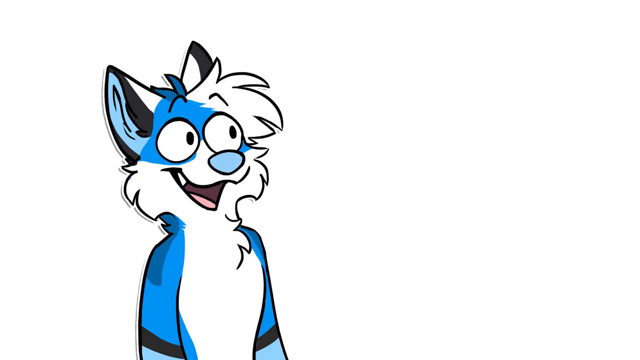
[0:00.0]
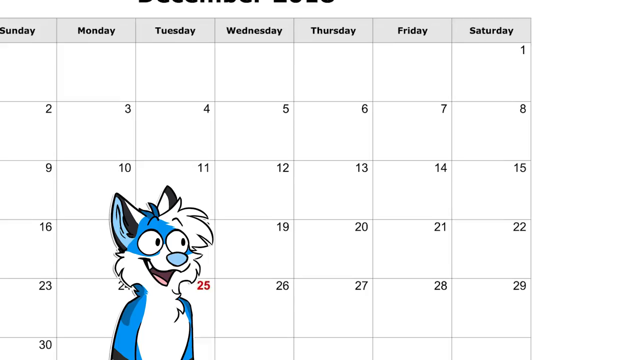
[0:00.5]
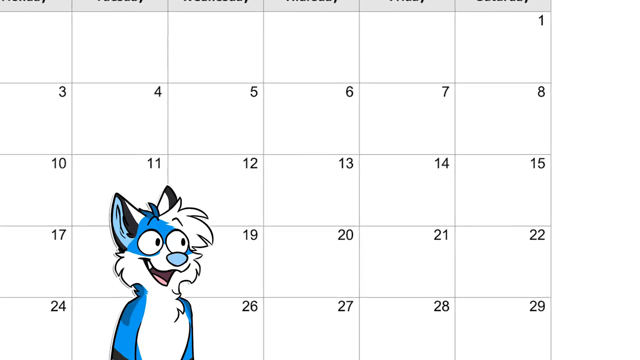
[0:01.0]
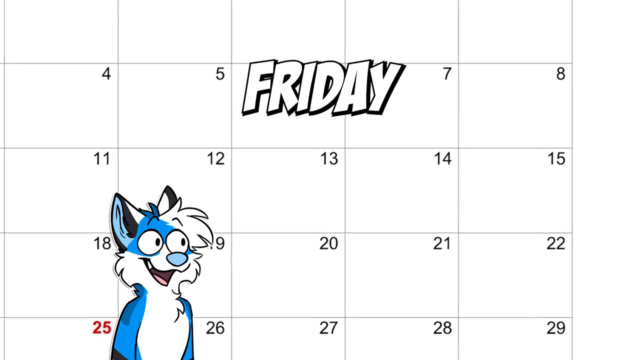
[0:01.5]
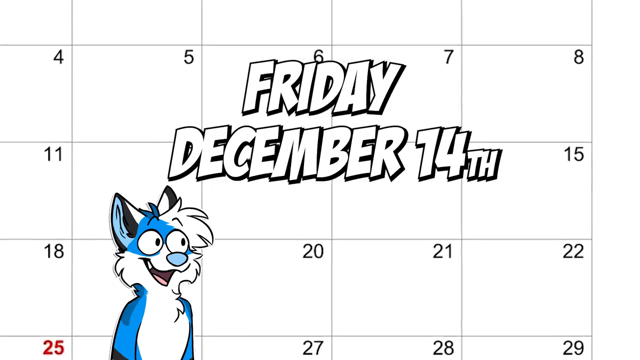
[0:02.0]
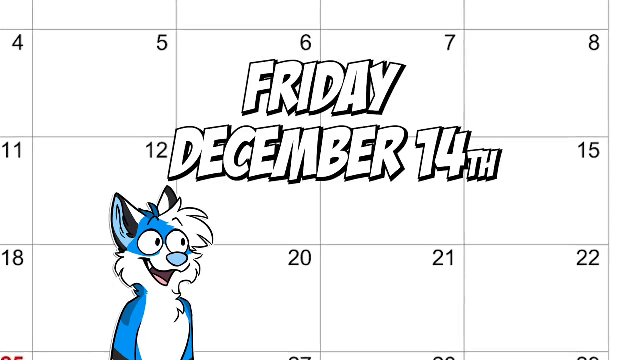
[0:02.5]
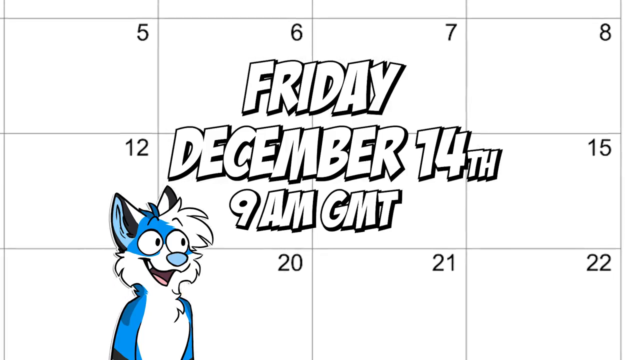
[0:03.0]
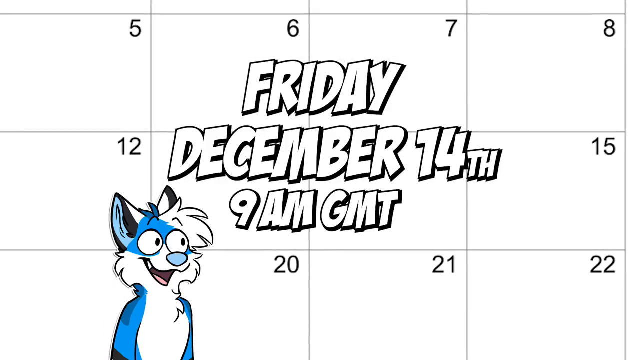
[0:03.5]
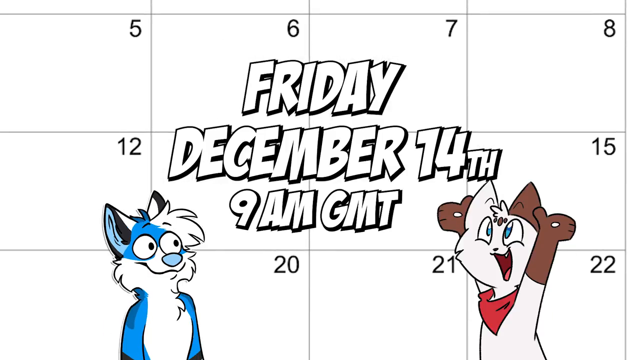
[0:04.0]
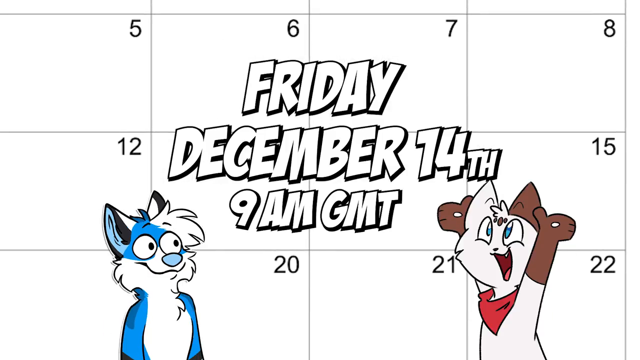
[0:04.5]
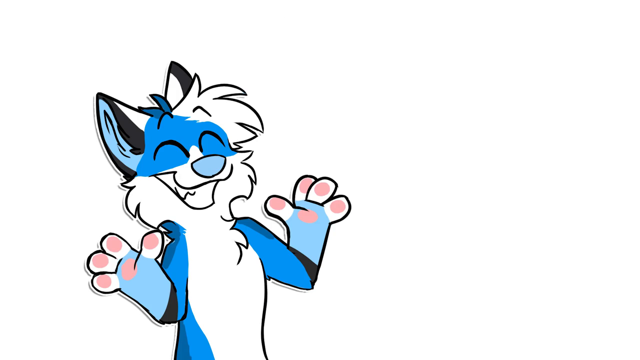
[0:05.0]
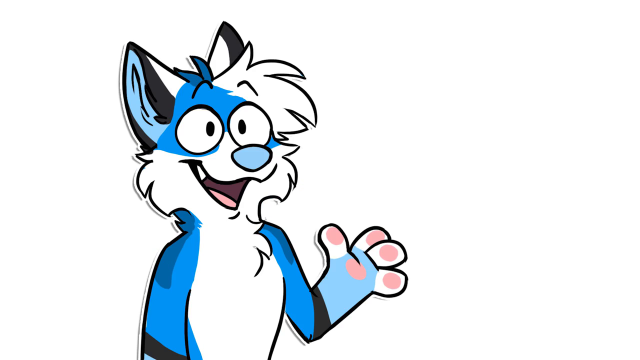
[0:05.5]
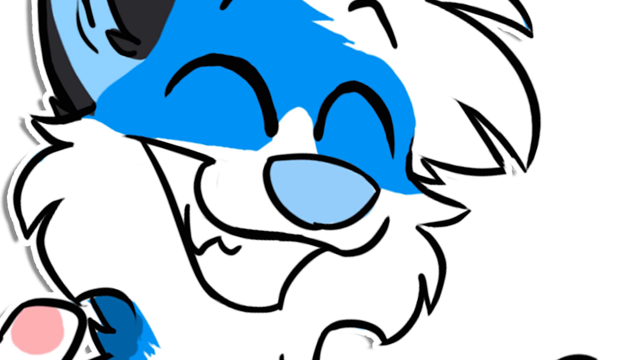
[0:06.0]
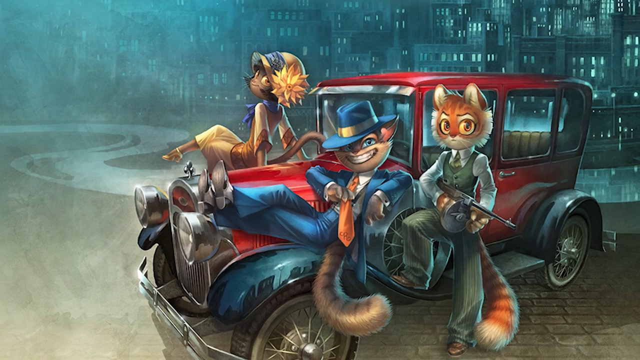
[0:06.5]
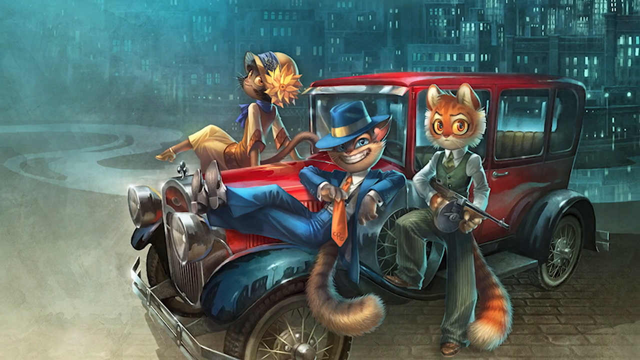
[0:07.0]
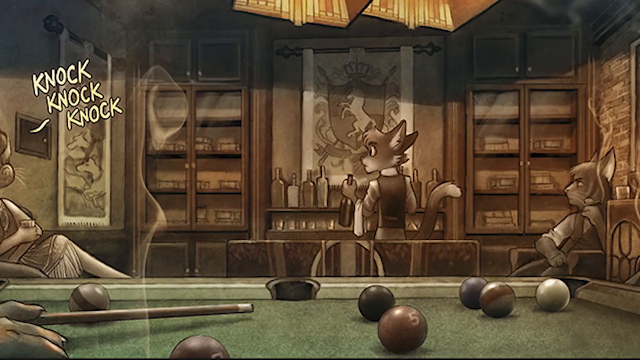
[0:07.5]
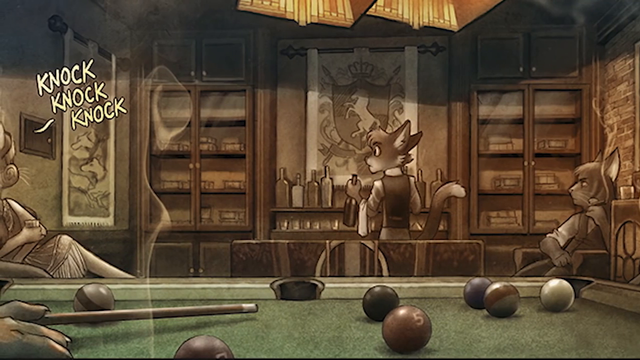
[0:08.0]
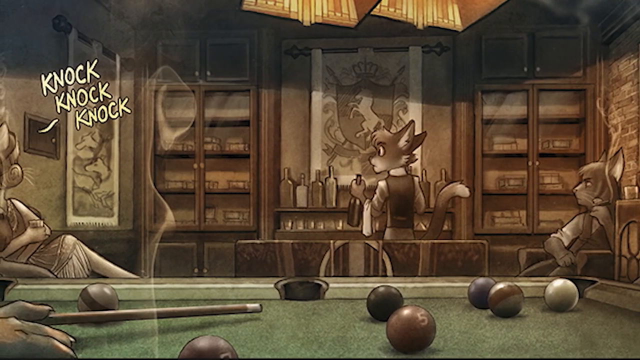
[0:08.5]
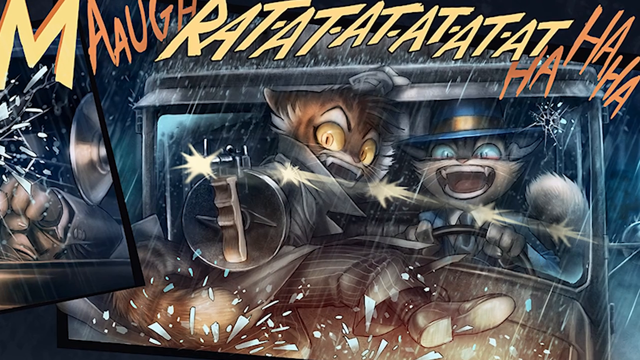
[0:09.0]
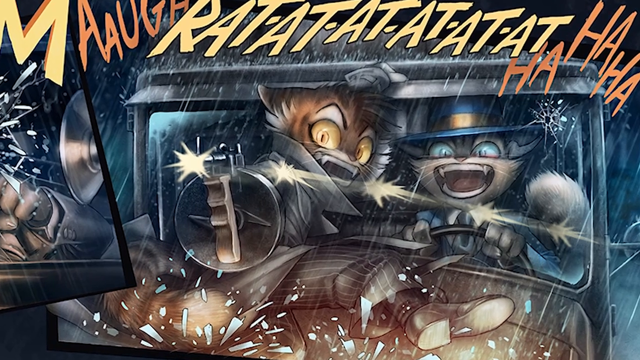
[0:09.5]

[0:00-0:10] A blue and white cartoon cat appears against an all-white backdrop, which then turns into a calendar. The cat stays stationary on the left-hand side, just looking, as the calendar zooms in; in the middle of the screen it reads "Friday, December 14th, 9 a.m. GMT." Another character, which looks like a cat as well, appears on the right-hand side, and the two quickly throw up their hands to celebrate together. The blue cat is then shown by itself with its hands up, followed by various pictures of art showing cats in different scenarios.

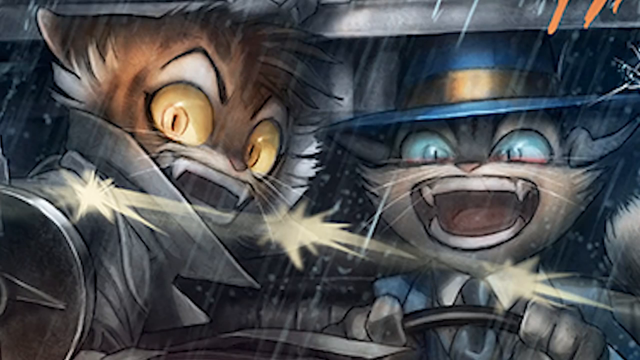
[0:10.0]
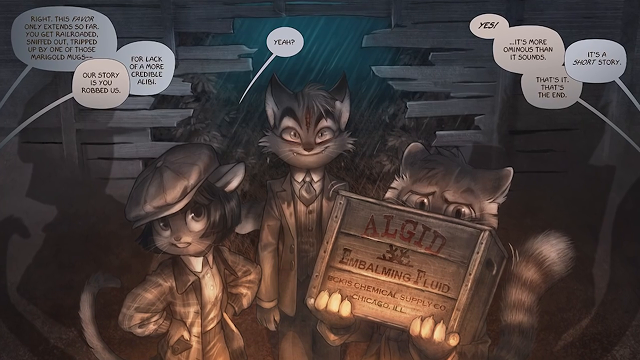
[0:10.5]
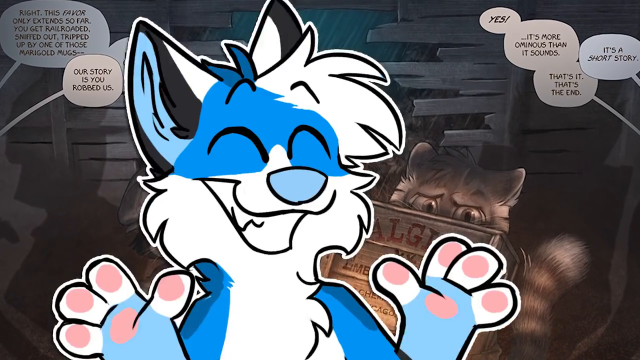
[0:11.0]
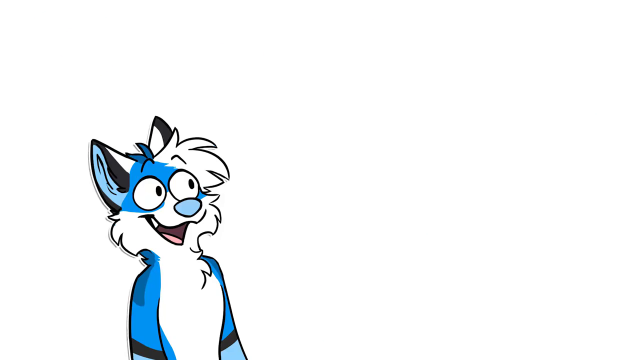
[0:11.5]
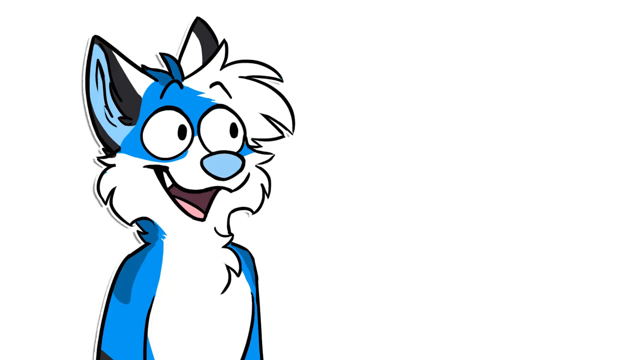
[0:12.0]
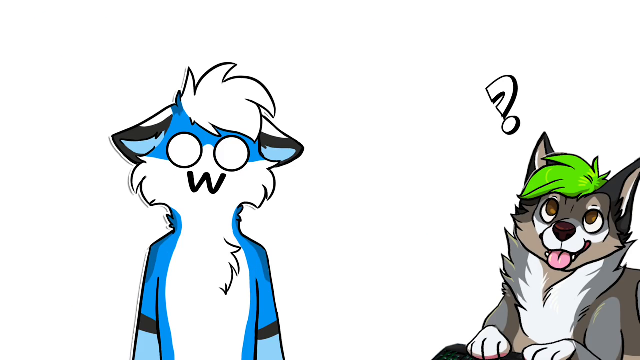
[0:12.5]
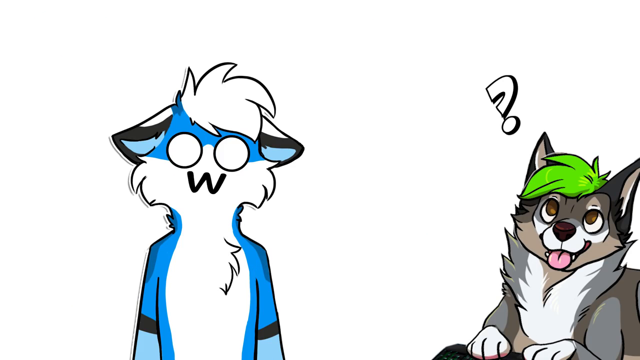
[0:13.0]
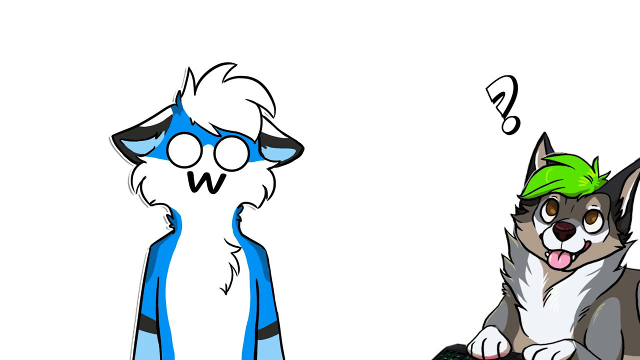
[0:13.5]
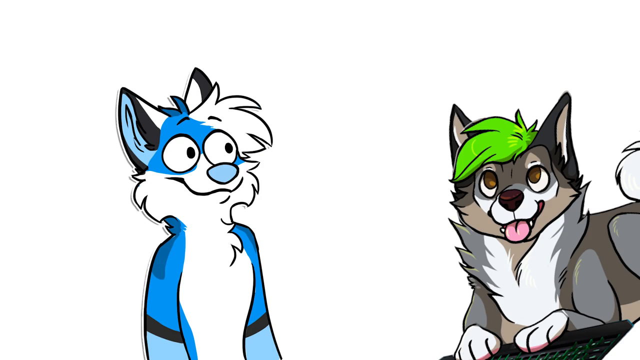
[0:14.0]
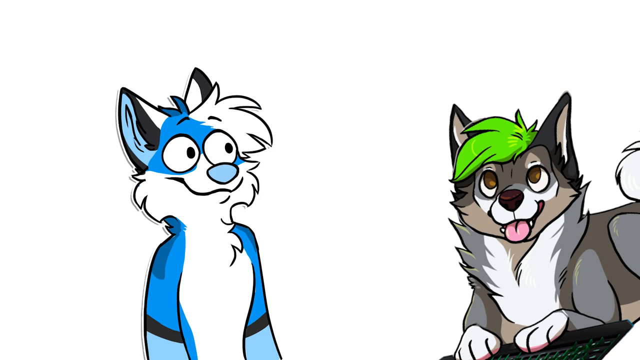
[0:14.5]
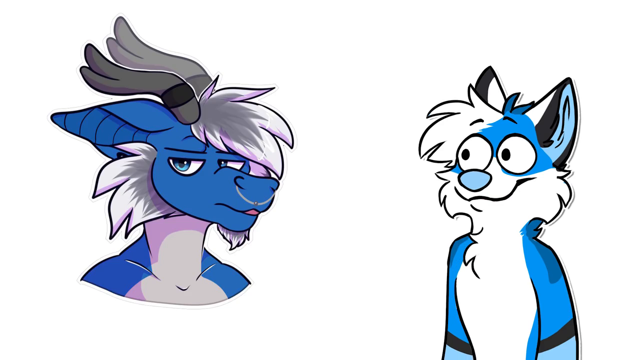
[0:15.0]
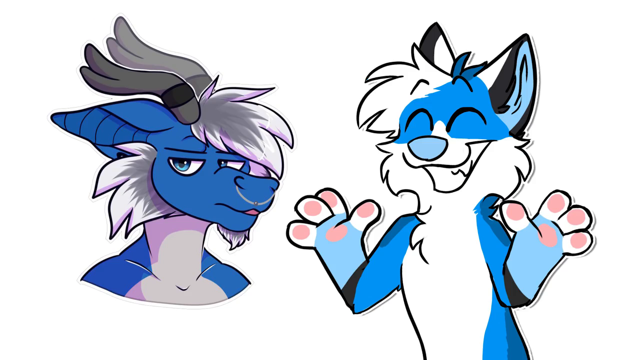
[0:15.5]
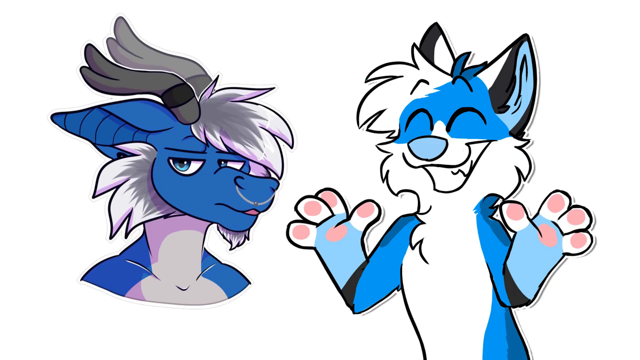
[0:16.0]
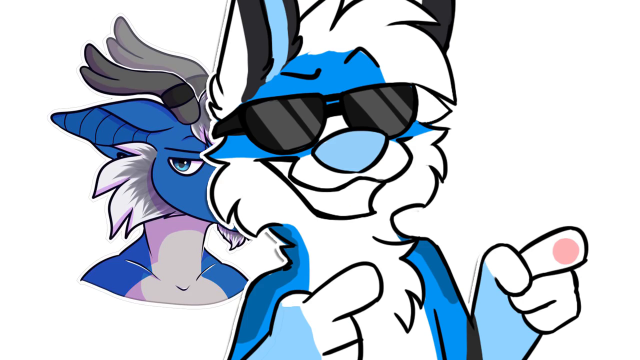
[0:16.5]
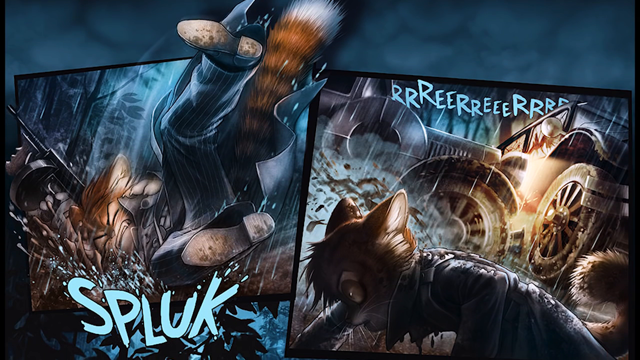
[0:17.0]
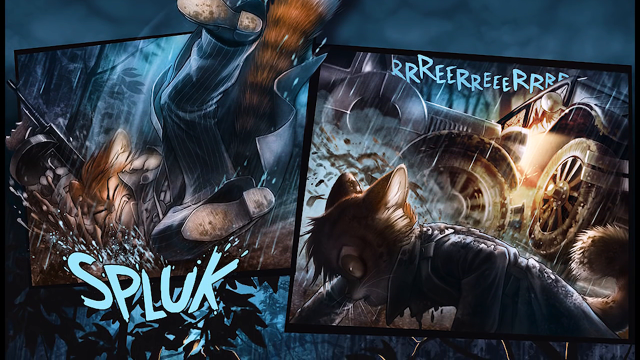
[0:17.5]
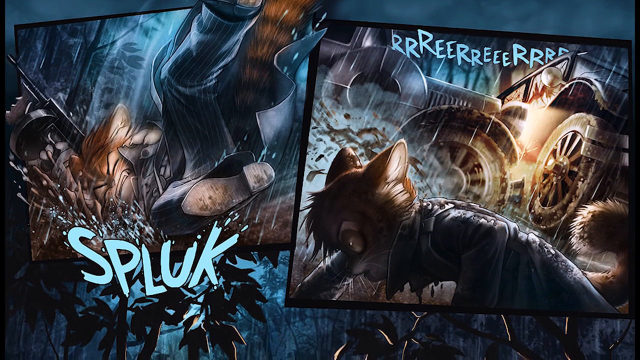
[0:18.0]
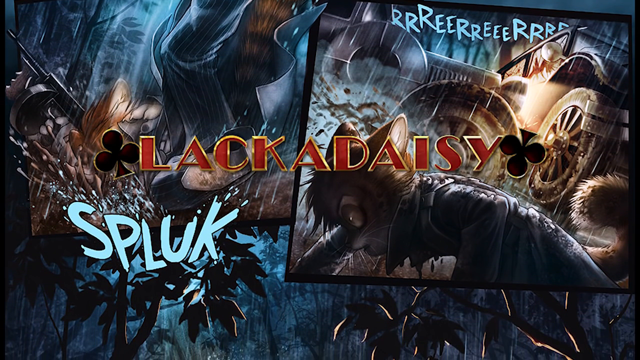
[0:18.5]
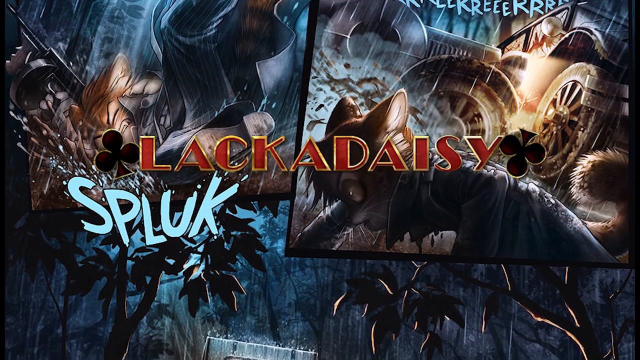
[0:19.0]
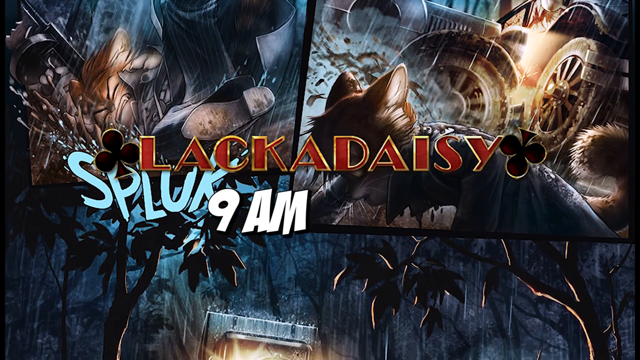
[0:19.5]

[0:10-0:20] A piece of picture art shows two cats driving, seemingly in a chase, since their mouths are open. The cat on the left looks as though it is trying to avoid something, judging by how its face and body are turned, while the cat on the right, wearing what looks like a derby hat, is driving. The video then switches to another segment that looks like a cartoon or maybe a comic strip from a comic book, with message bubbles over the cats. The blue cat is shown again, this time with various icons and pictures of other animals, and then "Lackadaisy" appears across the screen.